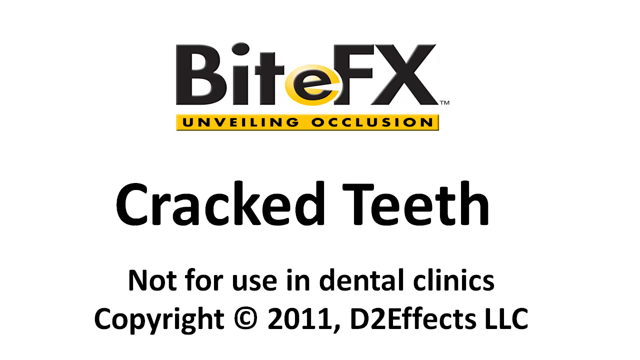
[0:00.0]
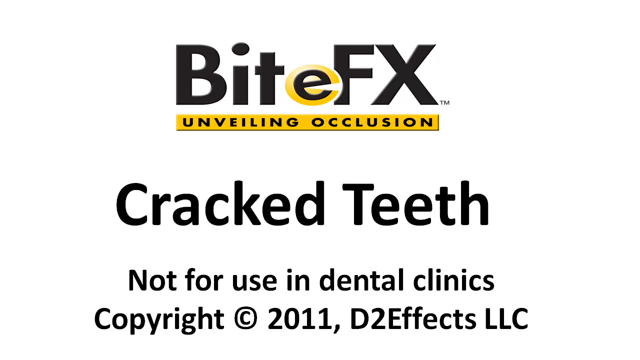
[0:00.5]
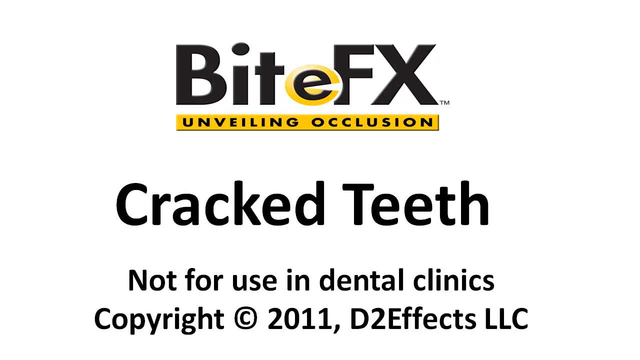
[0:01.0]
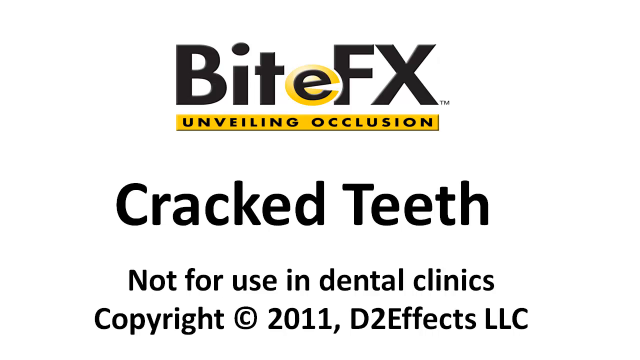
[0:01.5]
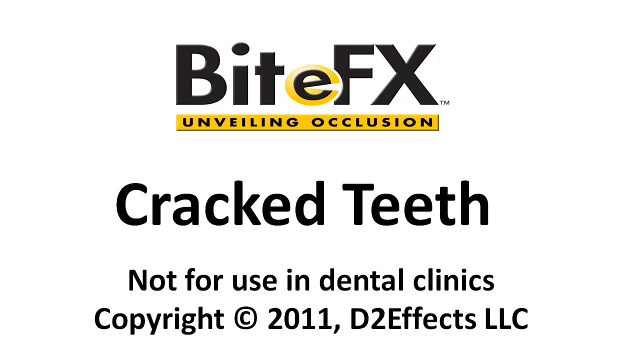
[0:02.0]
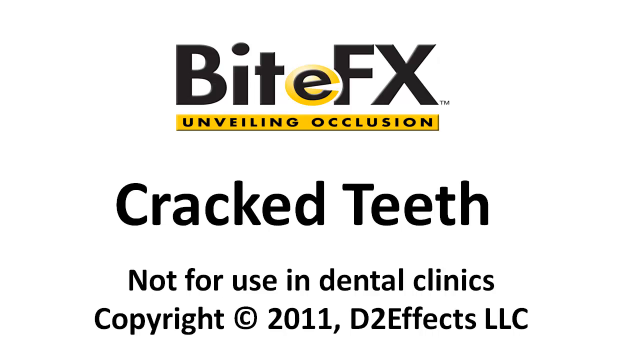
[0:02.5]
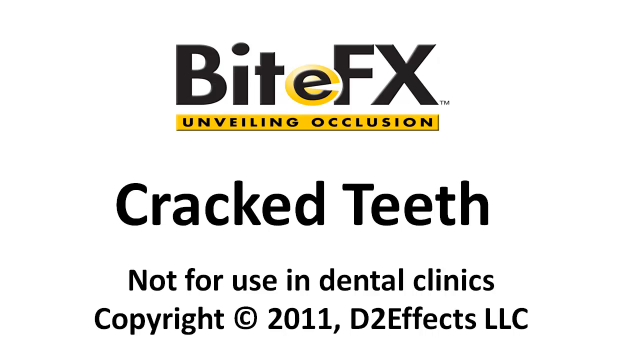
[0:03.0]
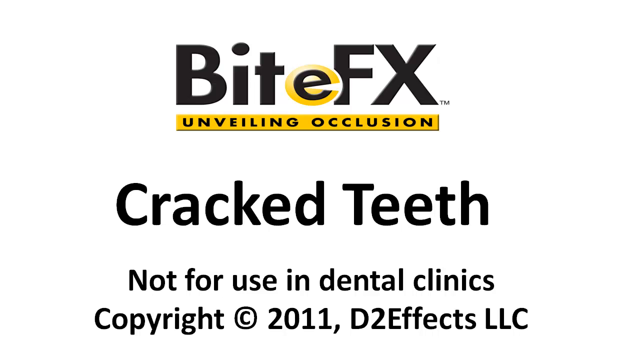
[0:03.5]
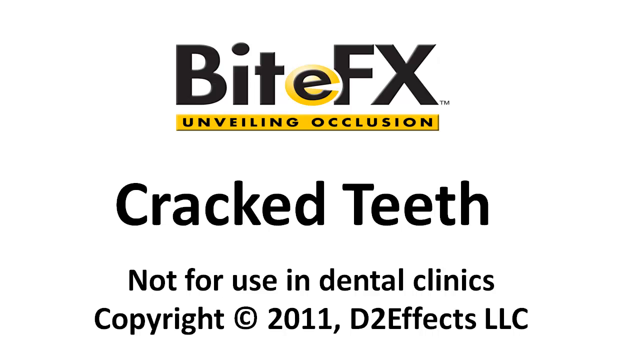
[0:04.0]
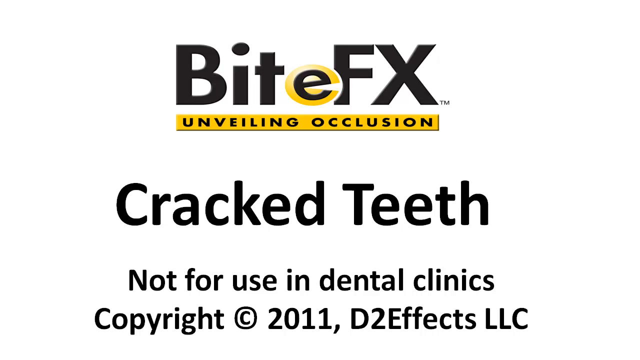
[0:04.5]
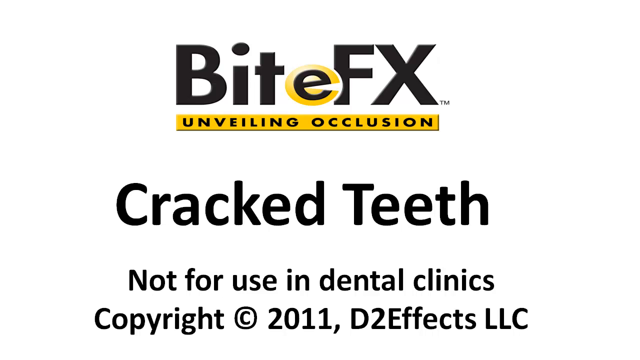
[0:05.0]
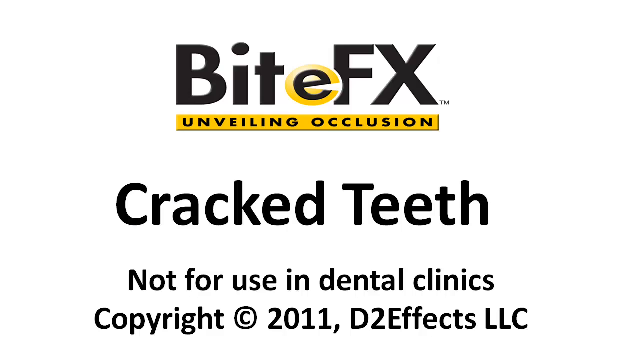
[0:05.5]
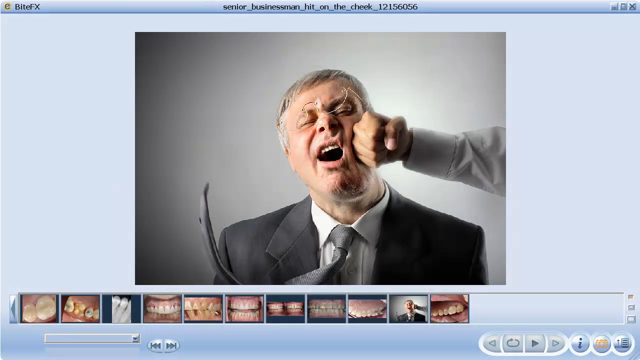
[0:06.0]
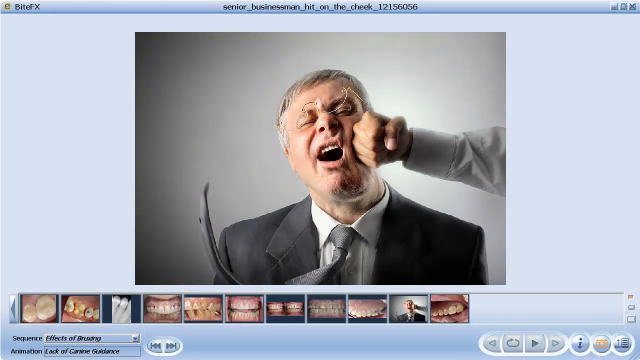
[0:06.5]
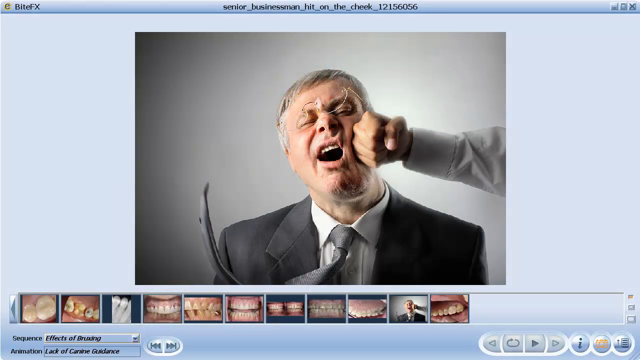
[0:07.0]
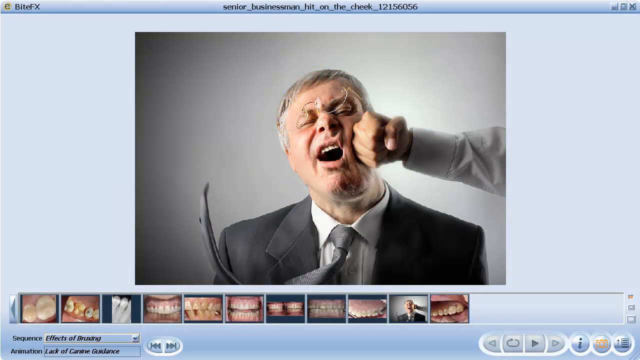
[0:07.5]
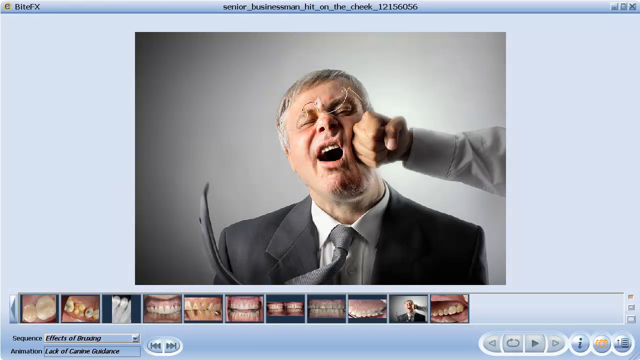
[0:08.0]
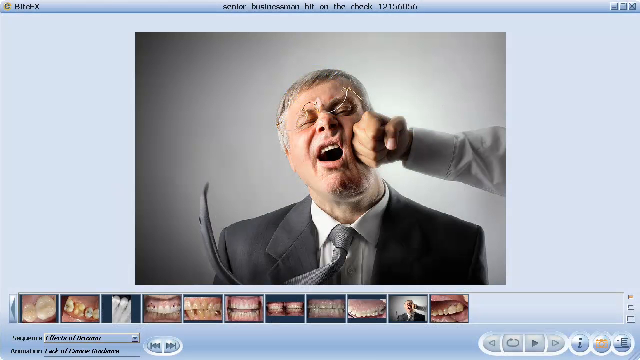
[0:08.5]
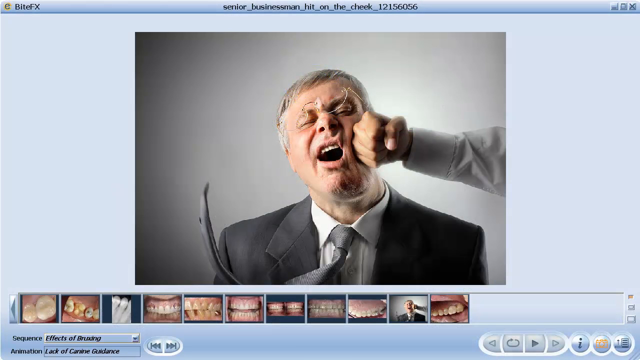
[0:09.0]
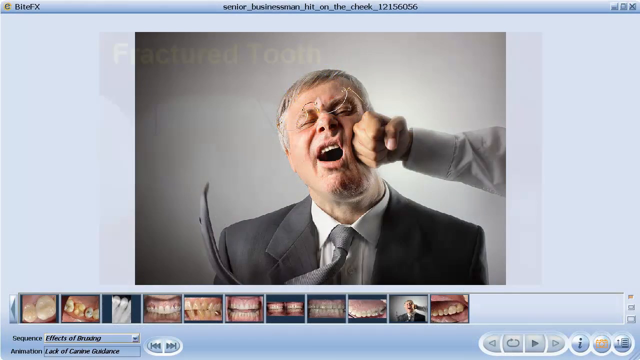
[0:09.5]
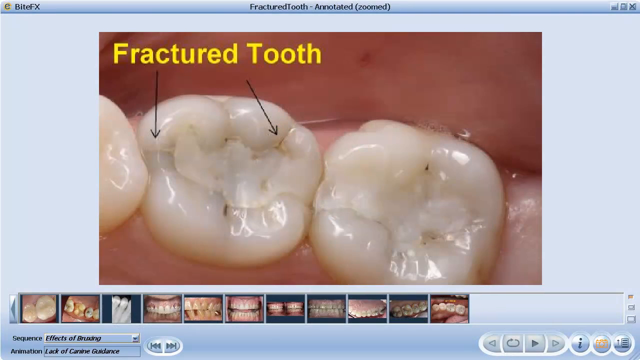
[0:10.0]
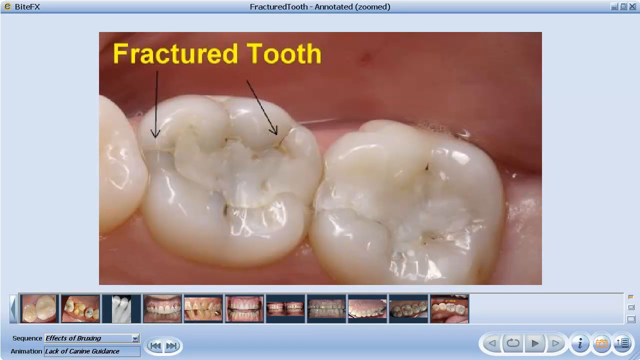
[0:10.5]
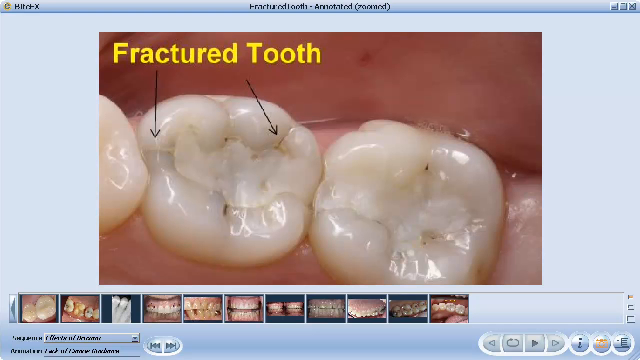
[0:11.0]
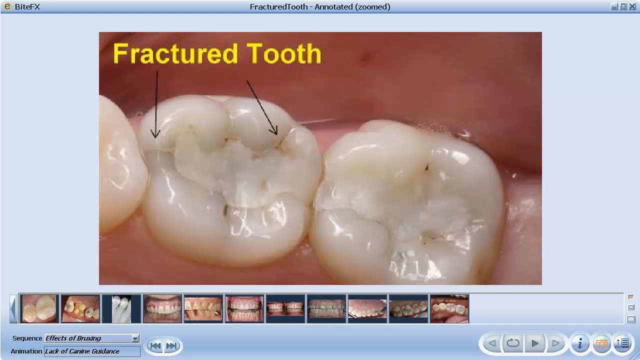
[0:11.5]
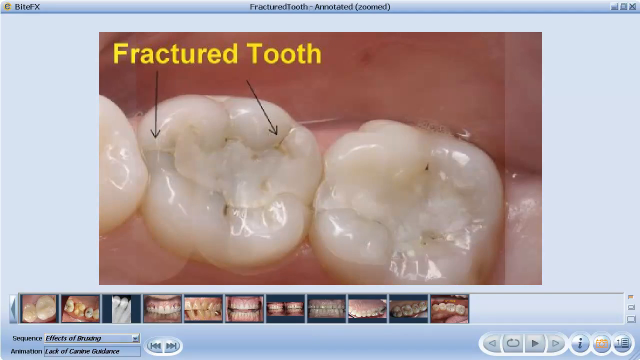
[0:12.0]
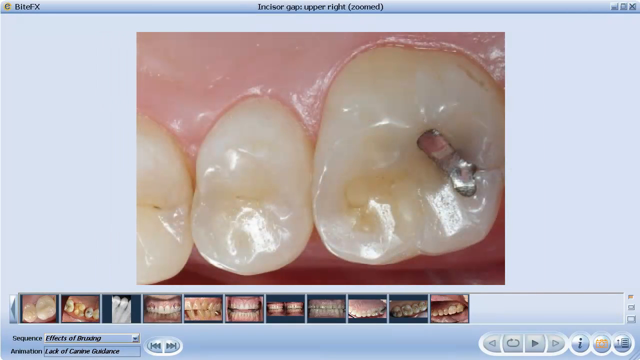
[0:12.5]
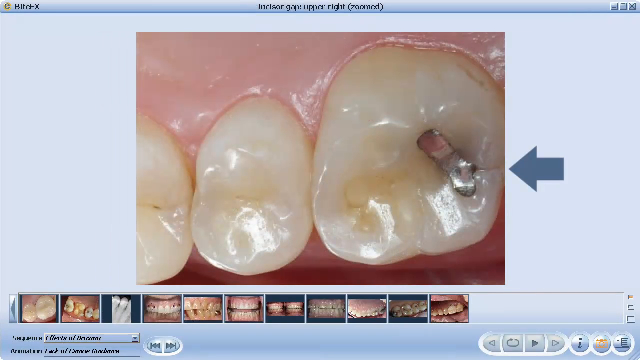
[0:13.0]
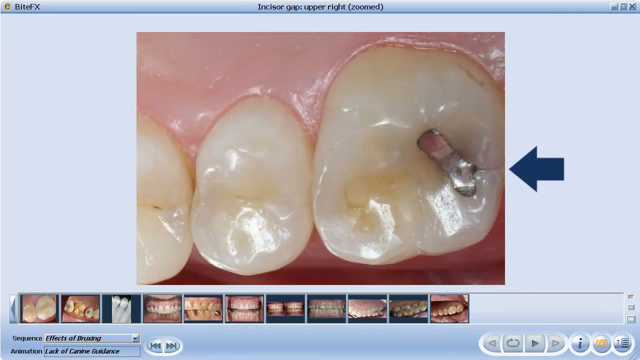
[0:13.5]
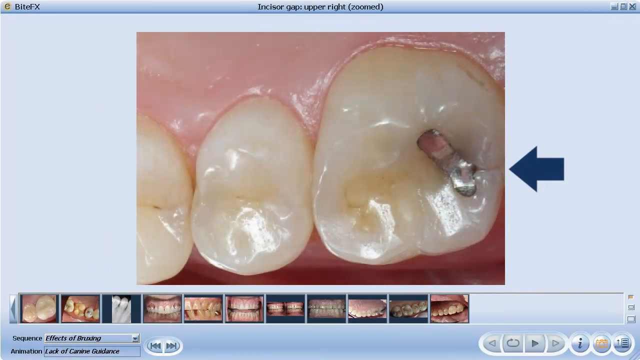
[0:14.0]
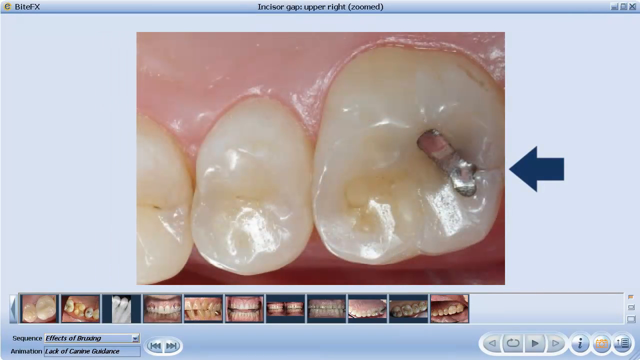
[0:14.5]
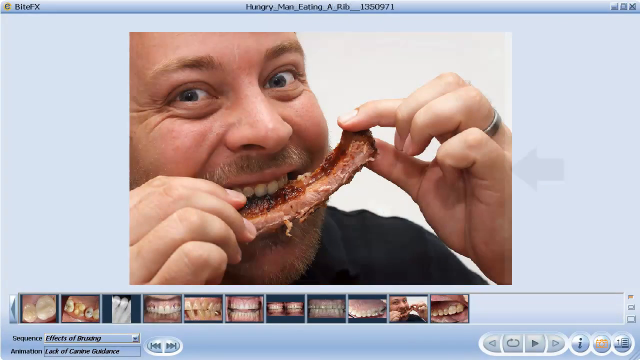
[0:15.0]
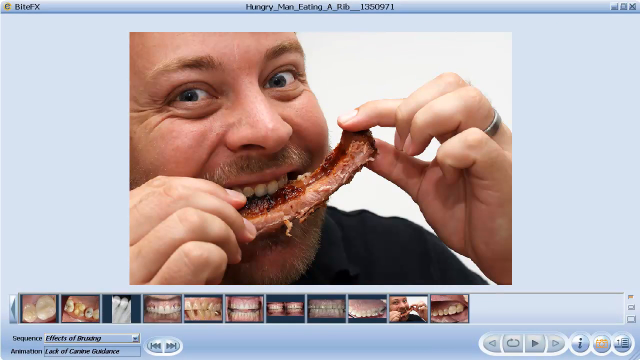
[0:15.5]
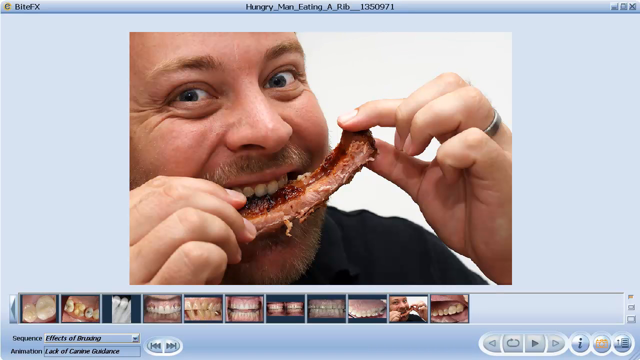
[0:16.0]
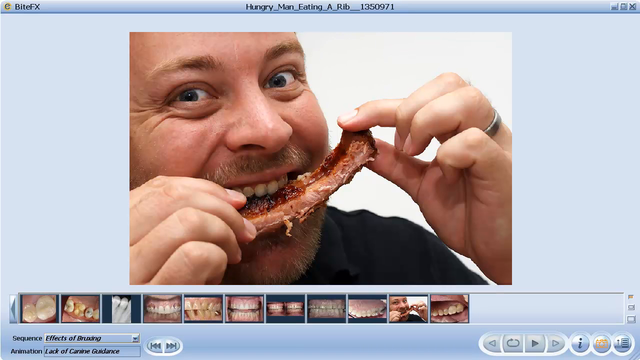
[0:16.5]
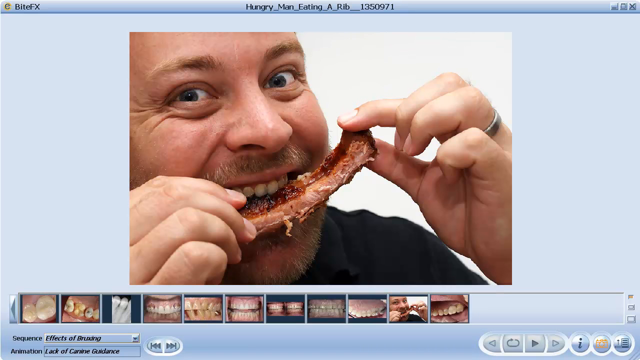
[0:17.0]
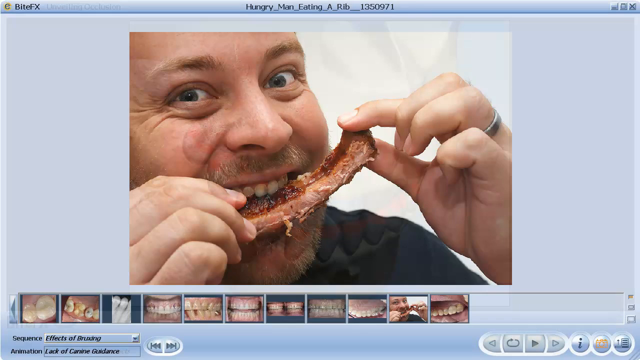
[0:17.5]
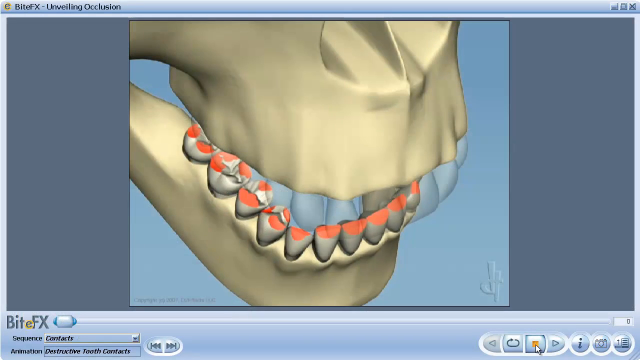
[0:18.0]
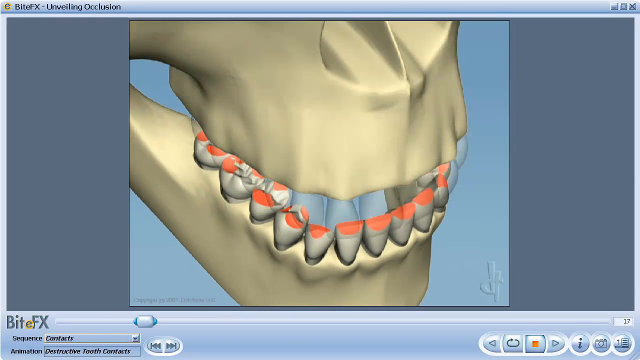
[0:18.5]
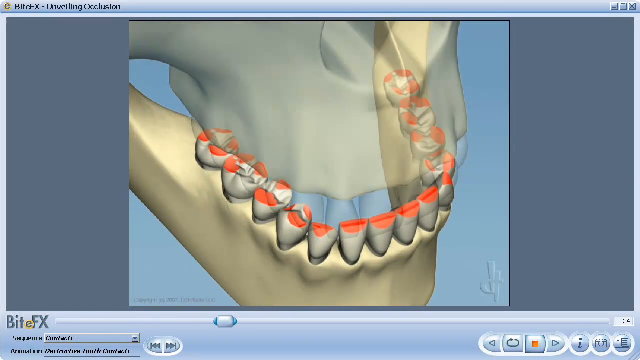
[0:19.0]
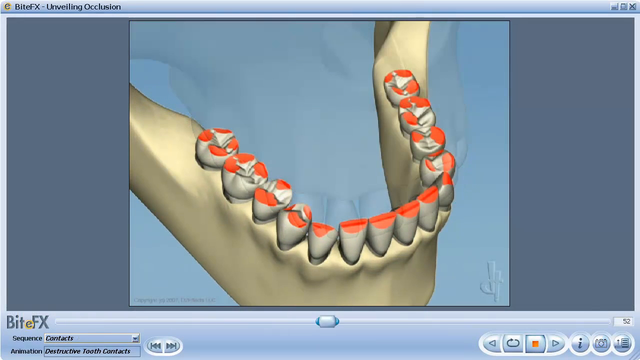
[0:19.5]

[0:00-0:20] On a white background, black text reads "Bite FX," with a little circle behind the E. A little yellow box with black text says "Unveiling occlusion," and black text underneath reads "Cracked teeth not for use in dental clinics copyright 2011 D2FX LLC." This stays on the screen for a couple of seconds. Next comes a screen showing the Bite FX software, with a photo of a man being punched on the side of his face; his glasses are partially coming off and his tie is moving. A bar below shows a bunch of photos of teeth. A photo comes up with "fractured tooth" in yellow text and black arrows pointing to the fractured tooth. Another photo has a blue arrow pointing to what looks to be a filling. A photo shows a man eating a rib. An animation shows a skull with the jaw and teeth; part of the skull's head comes off to reveal the teeth, and some areas of the teeth show little red parts.